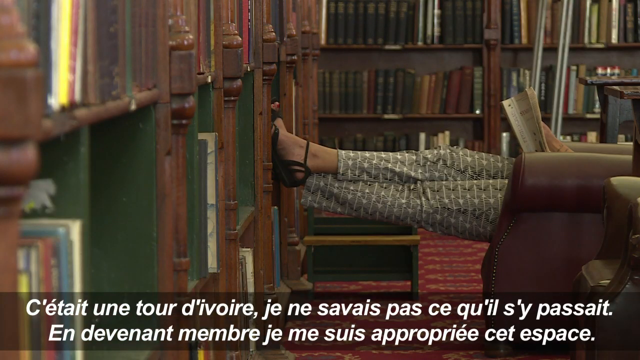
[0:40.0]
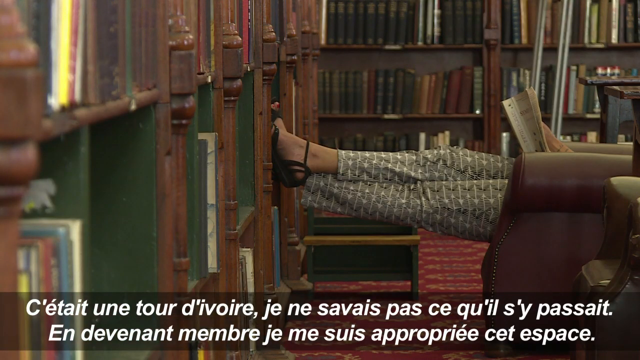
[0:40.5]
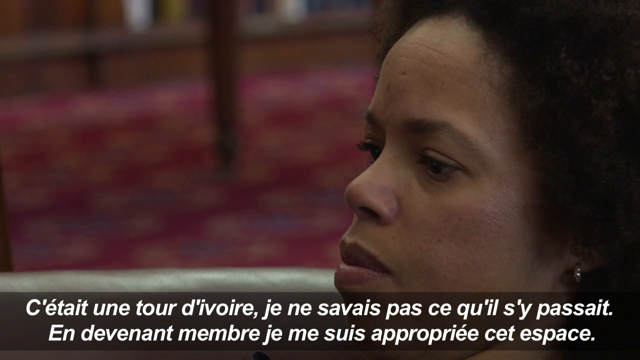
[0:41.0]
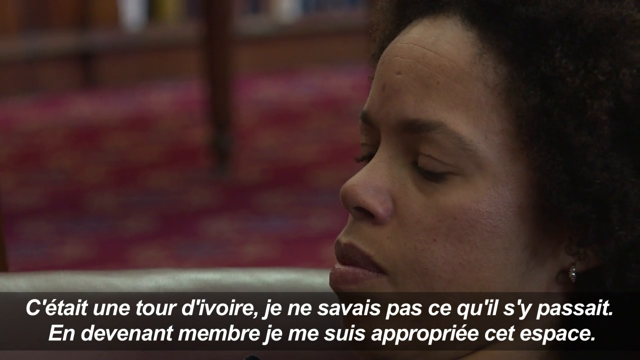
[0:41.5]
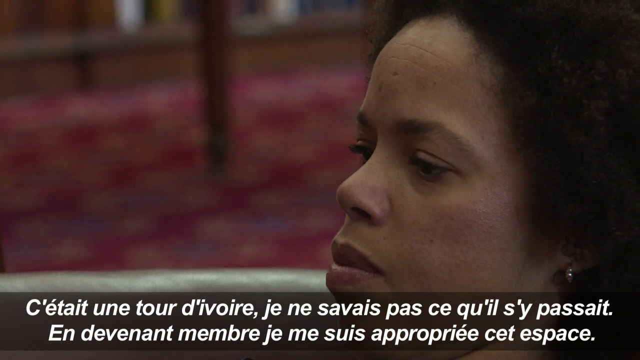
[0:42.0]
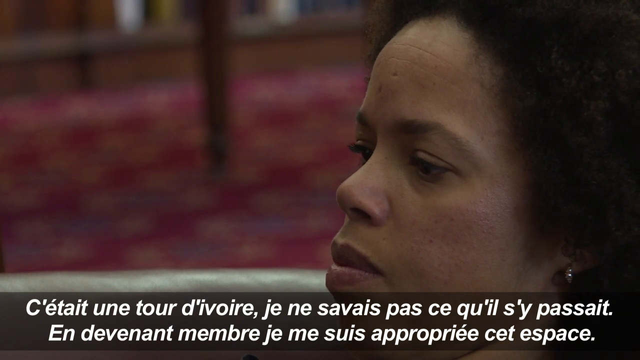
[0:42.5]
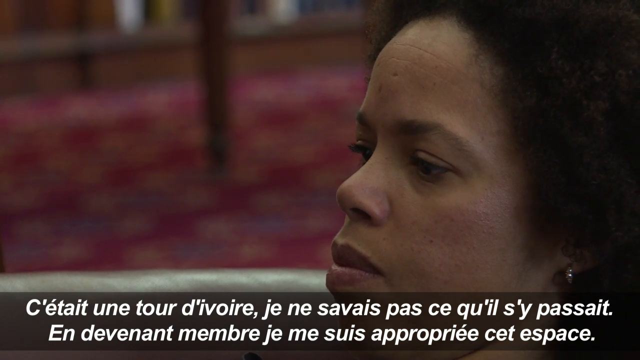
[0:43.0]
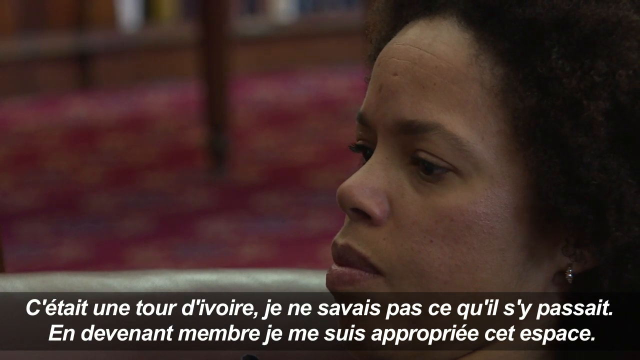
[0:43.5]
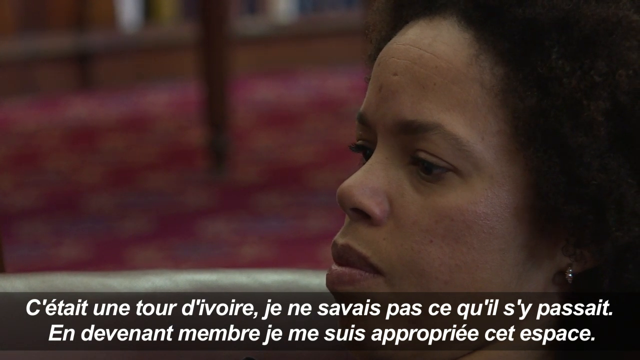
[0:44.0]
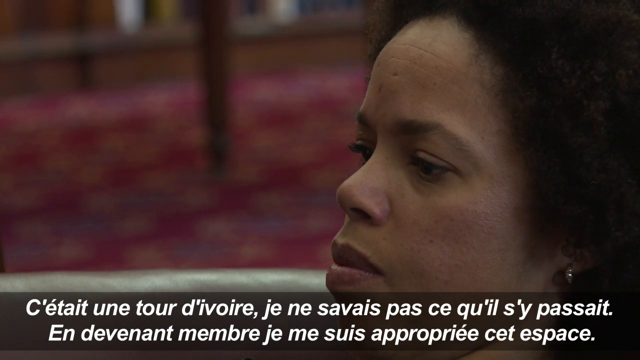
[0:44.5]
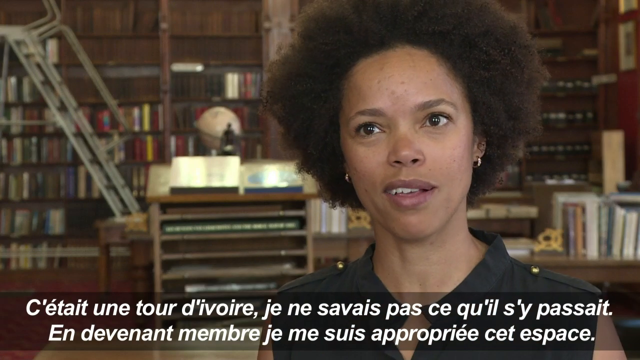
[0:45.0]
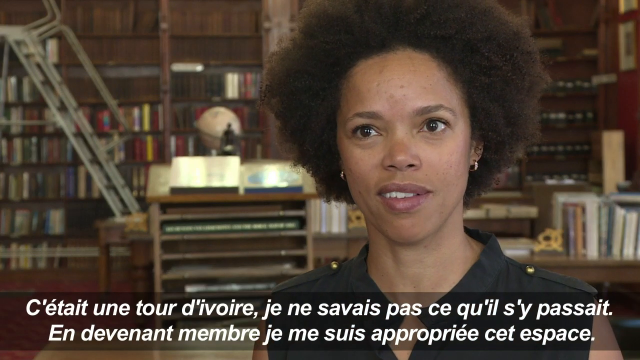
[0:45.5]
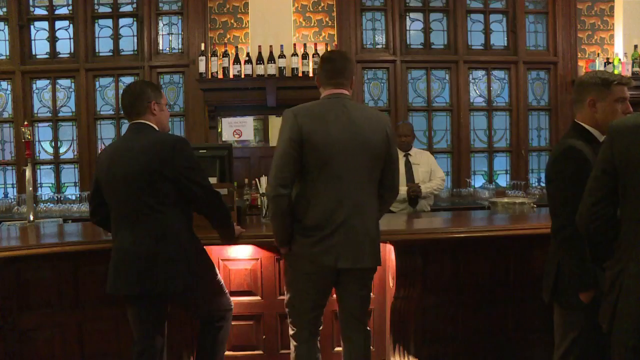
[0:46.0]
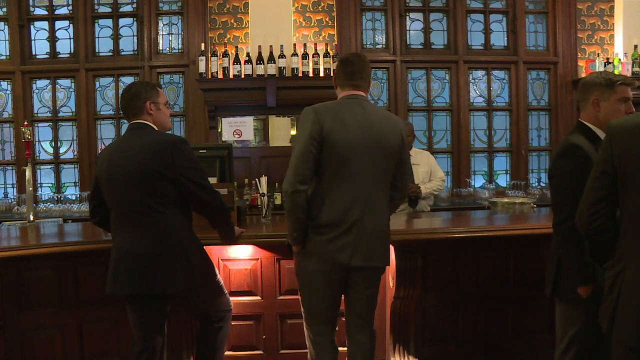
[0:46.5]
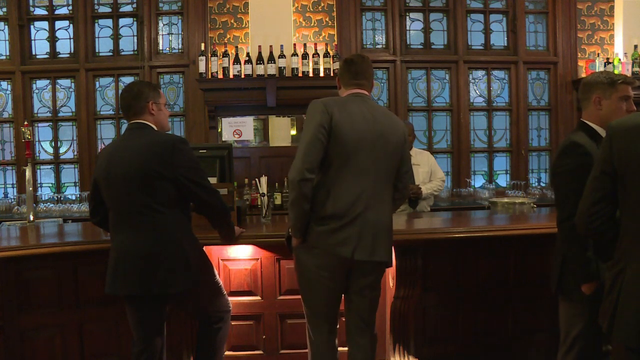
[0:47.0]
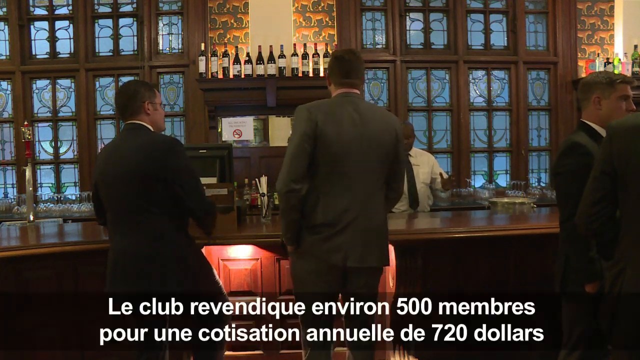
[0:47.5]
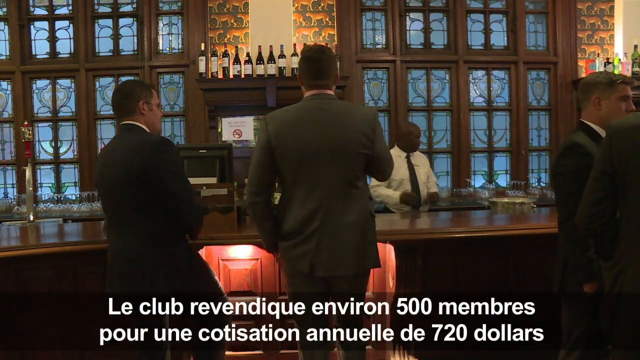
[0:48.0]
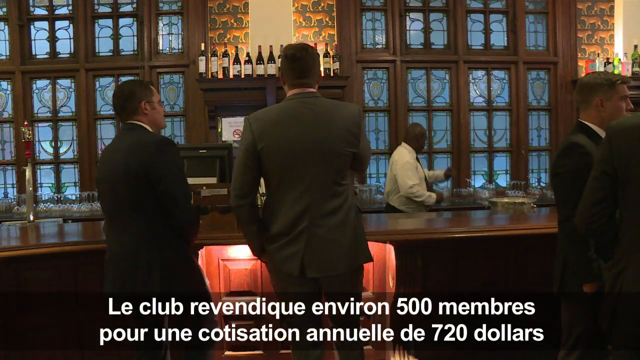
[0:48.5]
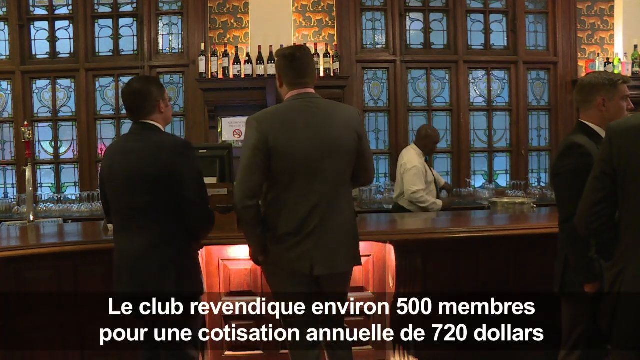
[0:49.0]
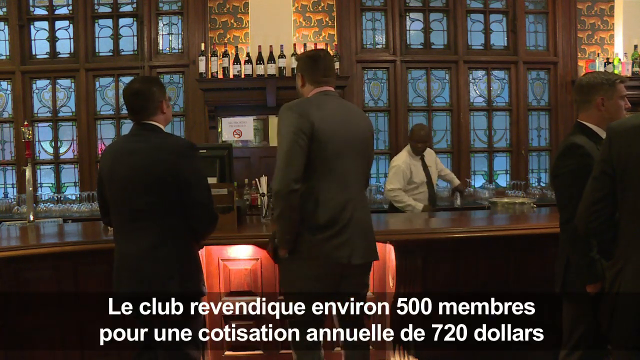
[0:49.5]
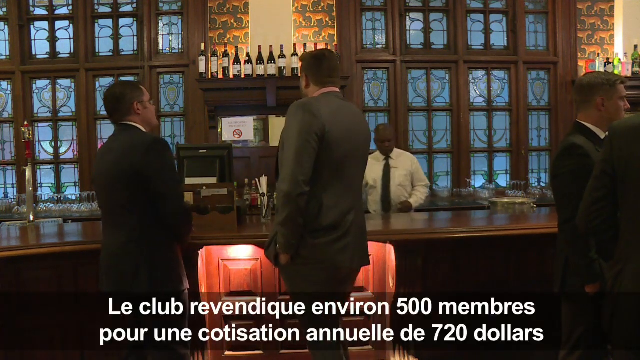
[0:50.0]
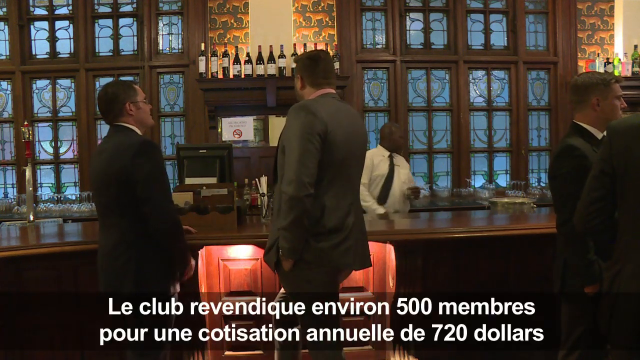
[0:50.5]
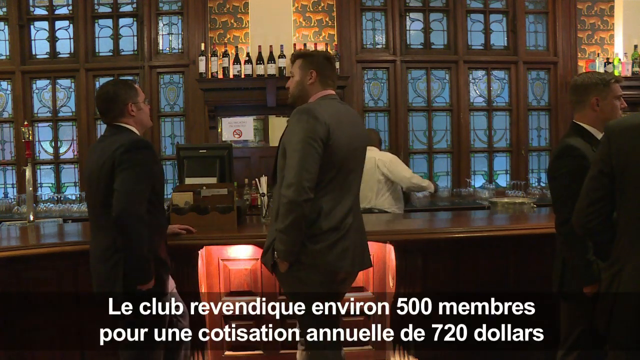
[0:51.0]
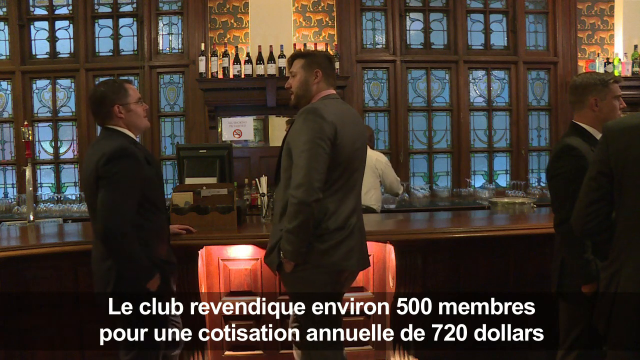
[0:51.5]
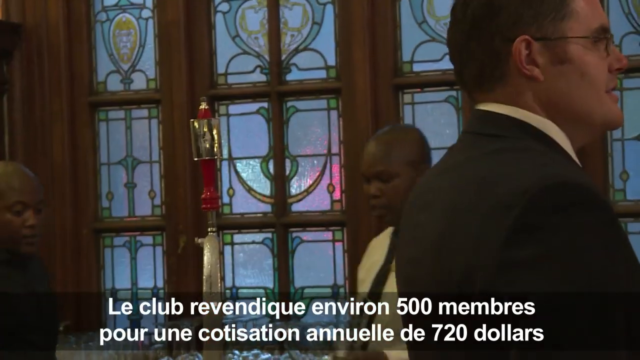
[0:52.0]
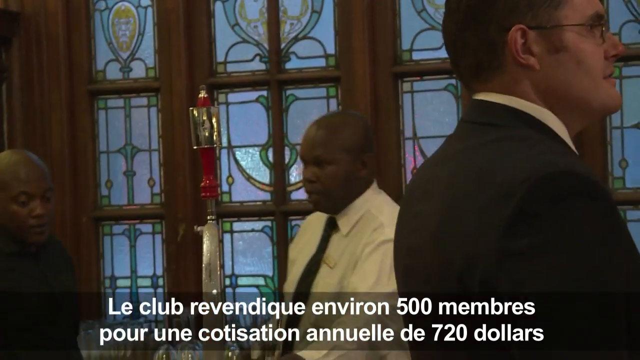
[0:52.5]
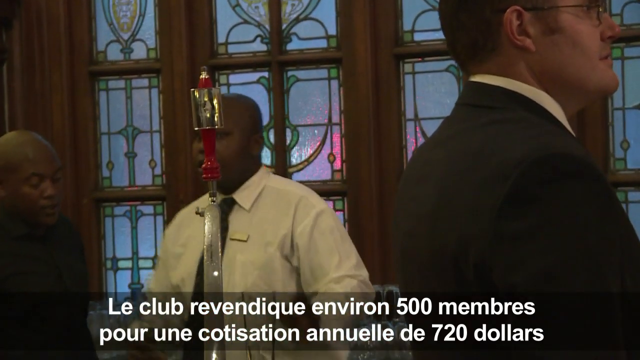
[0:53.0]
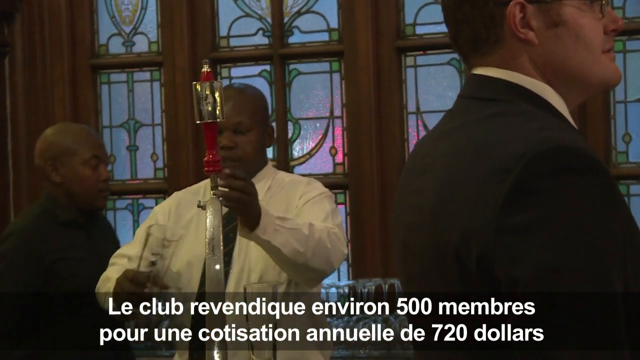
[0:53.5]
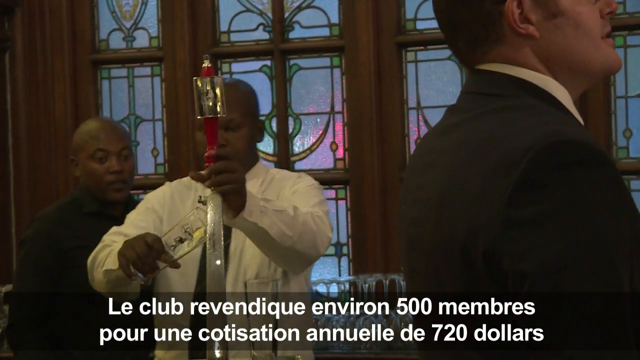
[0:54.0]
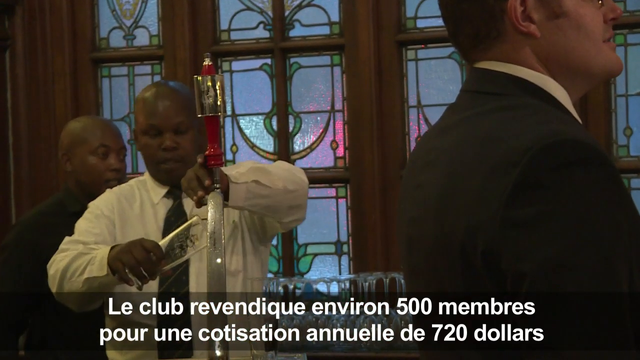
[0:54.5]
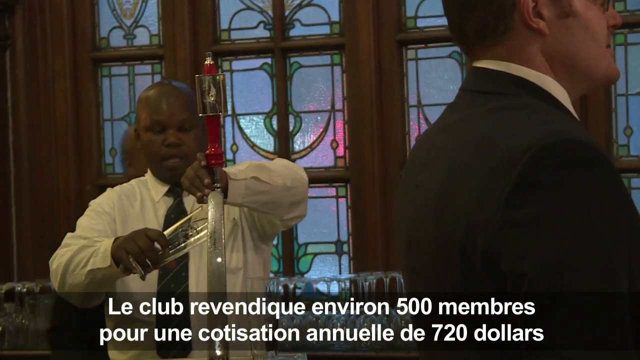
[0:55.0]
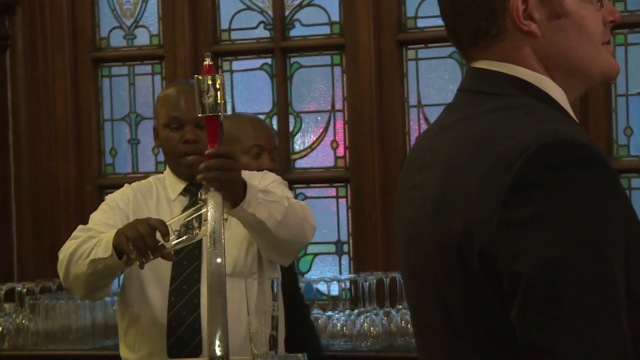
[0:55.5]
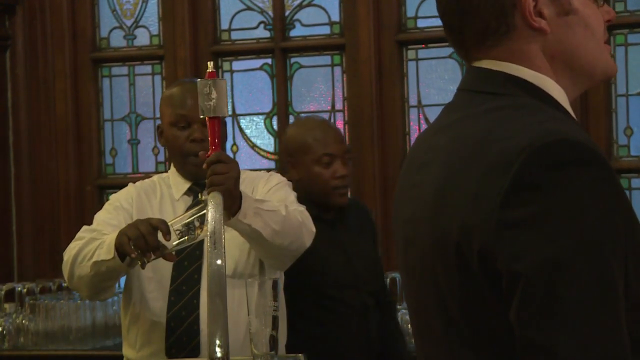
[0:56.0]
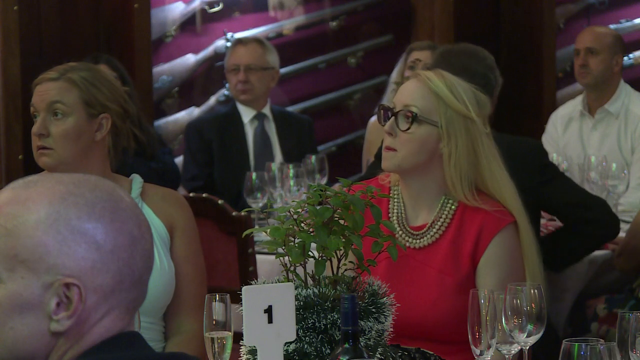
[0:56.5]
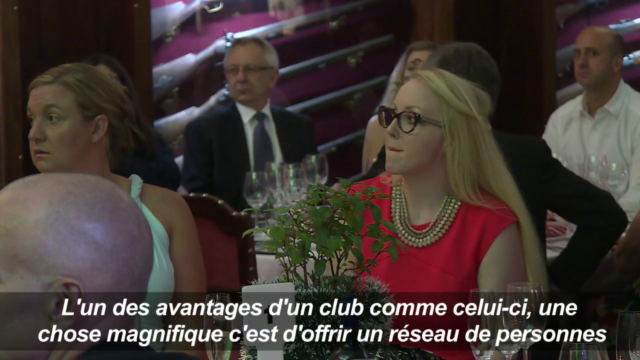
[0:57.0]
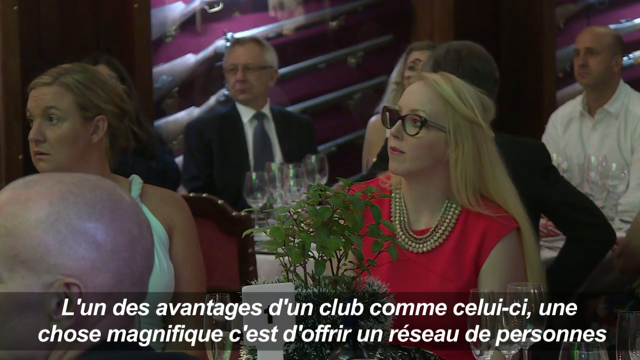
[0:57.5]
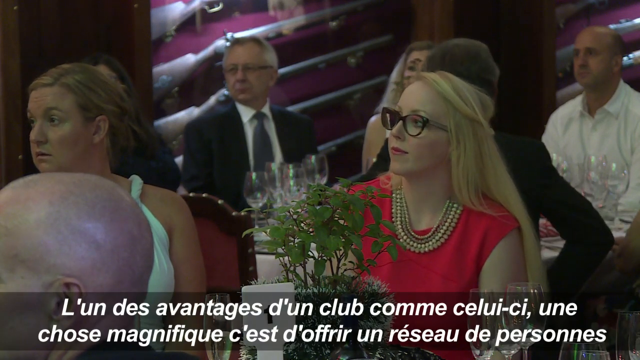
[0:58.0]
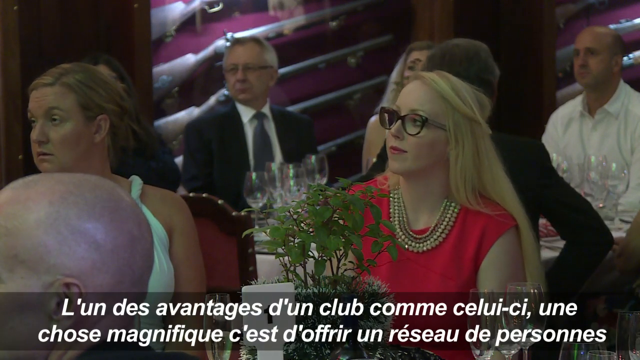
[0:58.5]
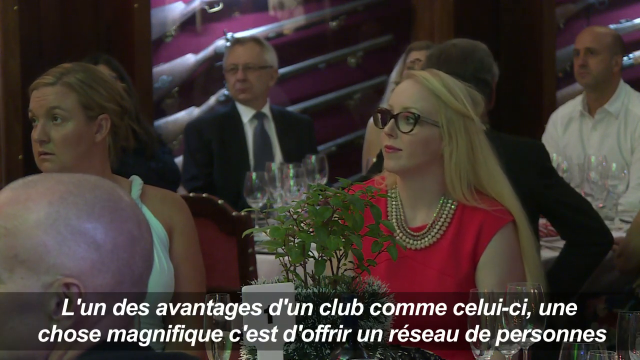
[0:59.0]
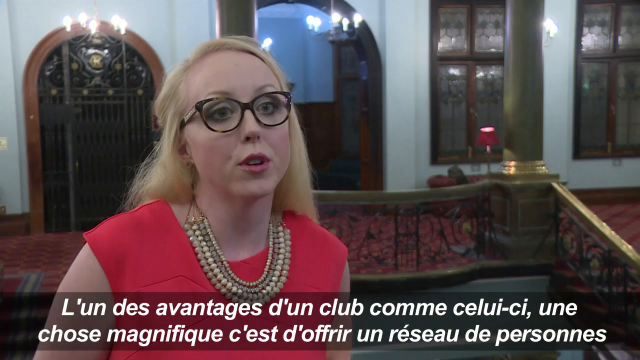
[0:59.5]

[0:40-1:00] The bar is shown again, this time from the front, facing toward the bar. The bartender, a black man in a white shirt and a black tie, is on the right-hand side of the bar, and two men stand in front of the bar looking toward him. There is a window to the left and the right of an area with about 10 bottles of liquor on a shelf above head height. There is a light in front of the bar that the men are standing in front of, and two more men stand off to the right; they are all middle-aged men wearing suits. There are some lights to the right of the bar as well. The bartender moves back and forth behind the bar and draws some beer from a tap. Another man walks in from his left, walks behind him and walks off to the right. Then a group of people is shown sitting at tables in front of the bar. A woman in a red dress has black glasses and long bleached blonde hair. Next to her is a woman in a sleeveless white dress. There is a plant in a planter on the table. Behind them are three men and one woman; one man, wearing a suit, is looking forward and off to his right, and the woman's clothing cannot be made out. There are glasses on the table behind them, and a man in a white shirt is also behind them. A bald man is in the foreground, with only his bald head and an ear visible, not his face. The woman is also looking off to her right.